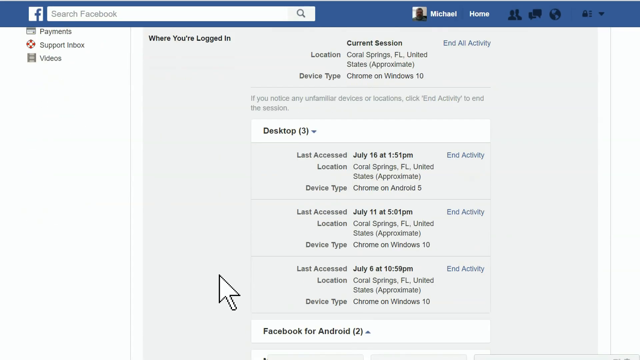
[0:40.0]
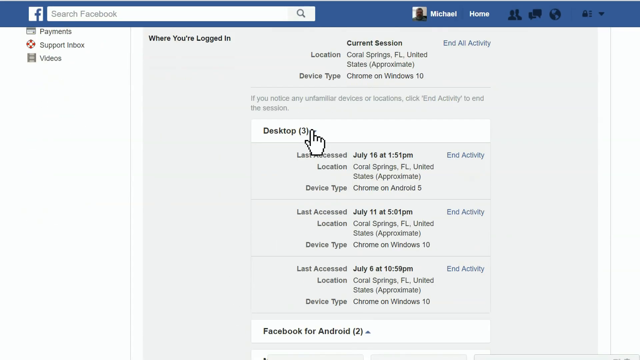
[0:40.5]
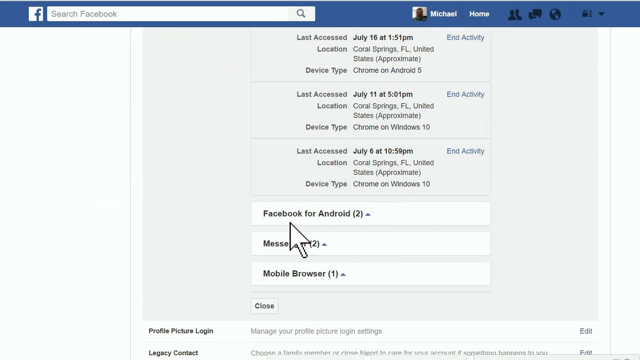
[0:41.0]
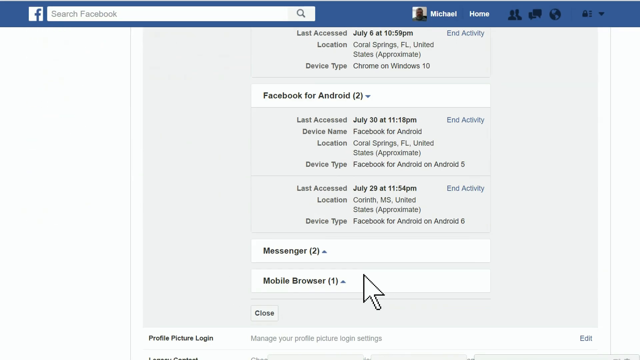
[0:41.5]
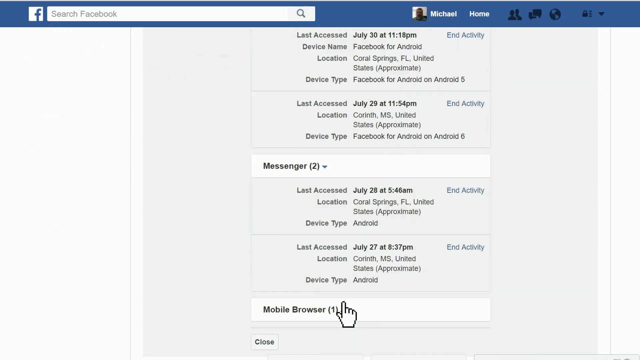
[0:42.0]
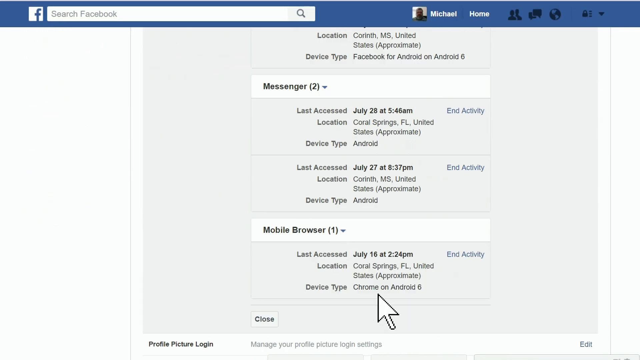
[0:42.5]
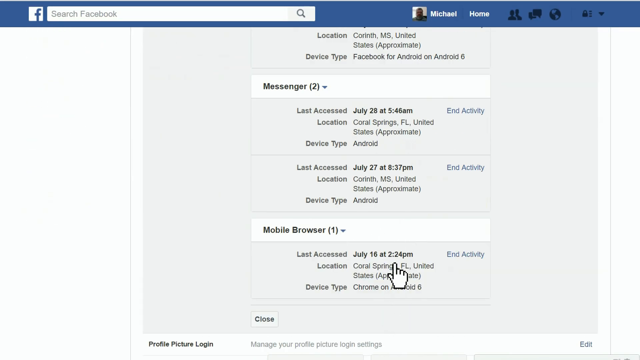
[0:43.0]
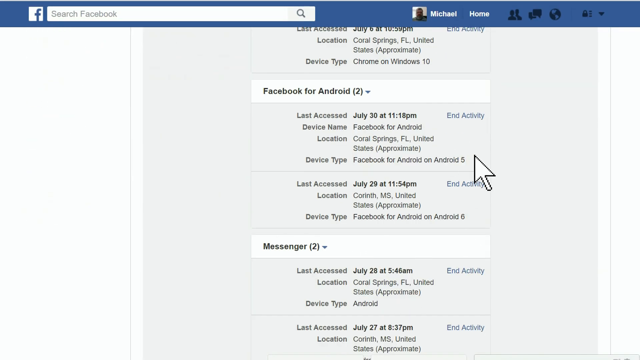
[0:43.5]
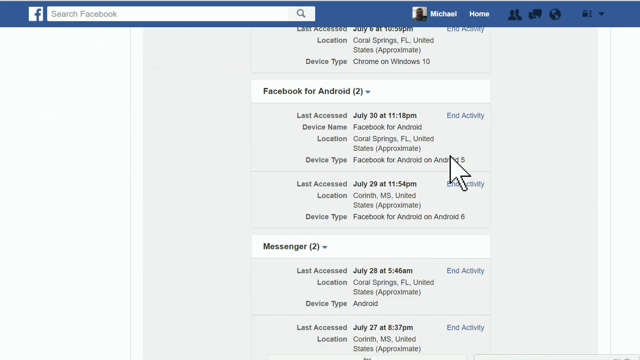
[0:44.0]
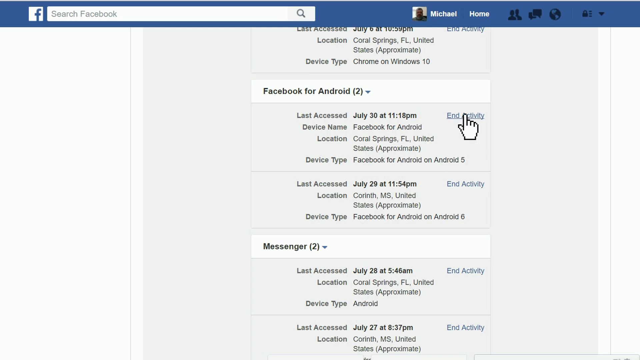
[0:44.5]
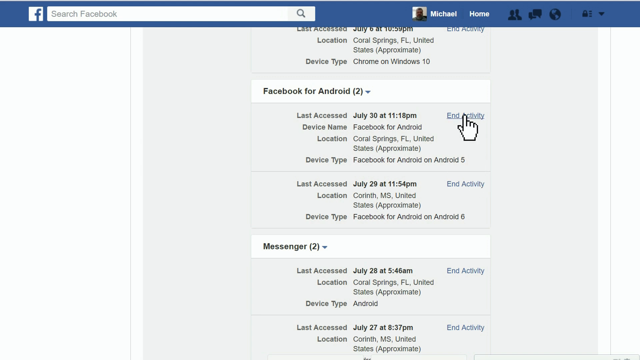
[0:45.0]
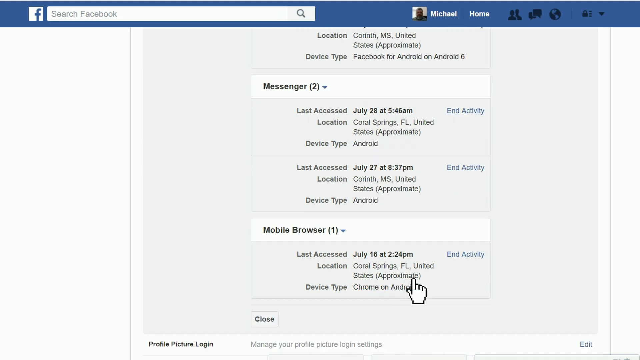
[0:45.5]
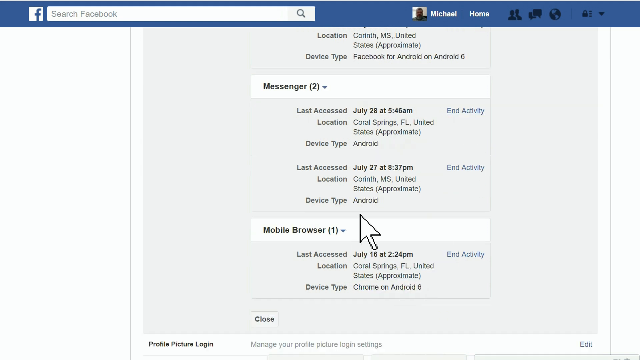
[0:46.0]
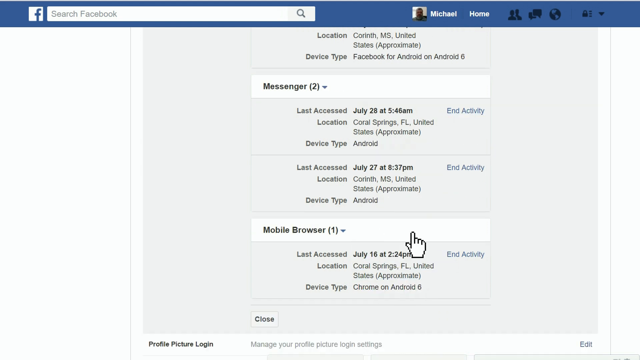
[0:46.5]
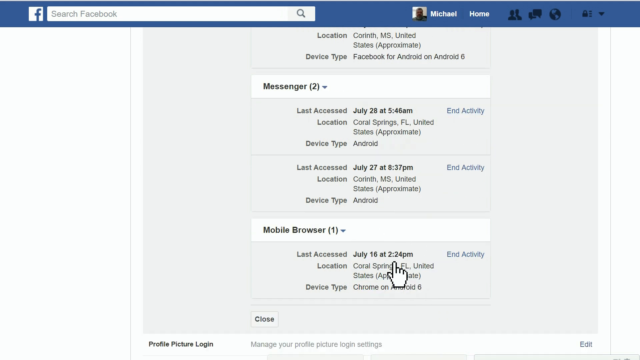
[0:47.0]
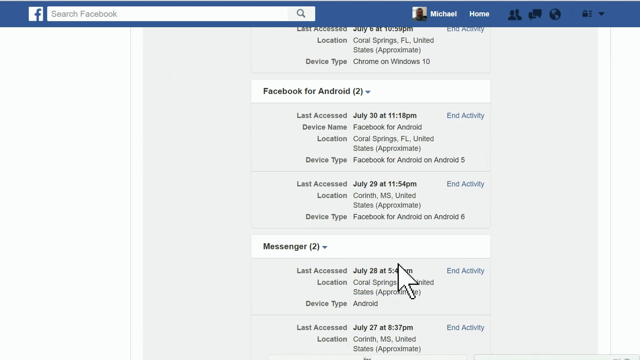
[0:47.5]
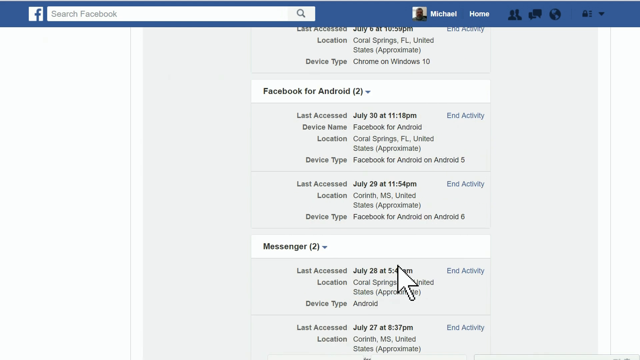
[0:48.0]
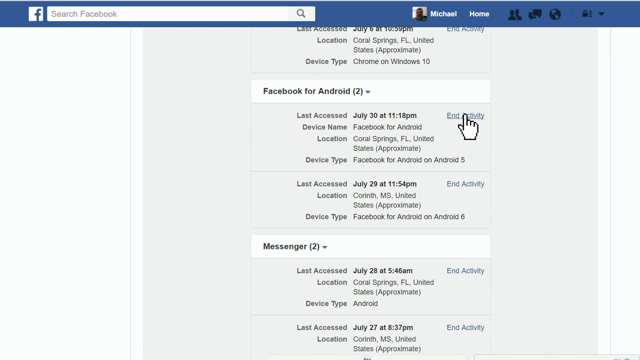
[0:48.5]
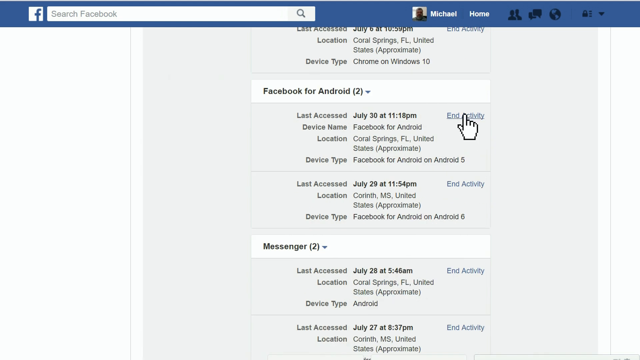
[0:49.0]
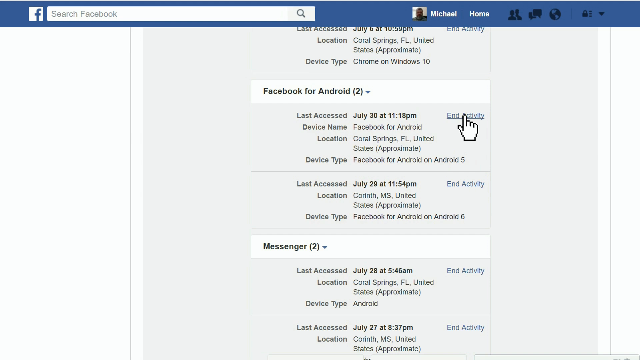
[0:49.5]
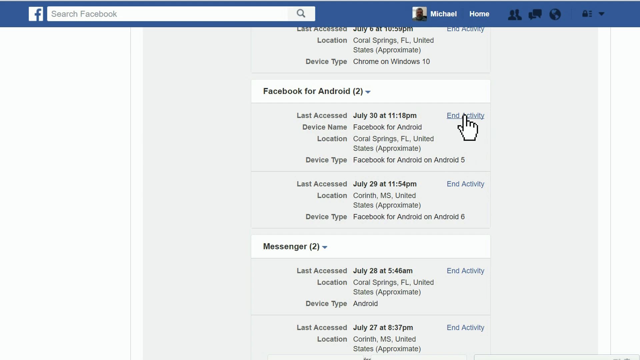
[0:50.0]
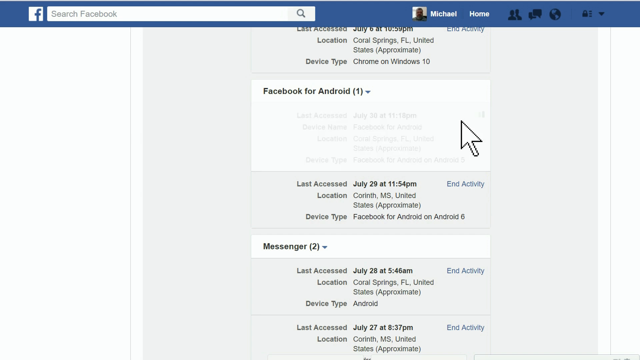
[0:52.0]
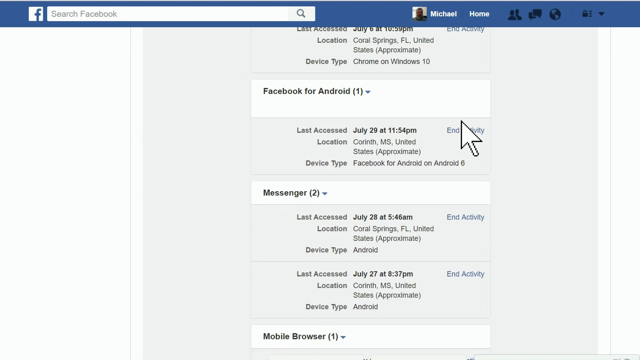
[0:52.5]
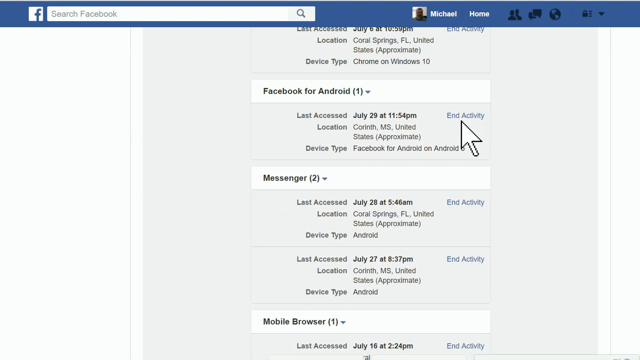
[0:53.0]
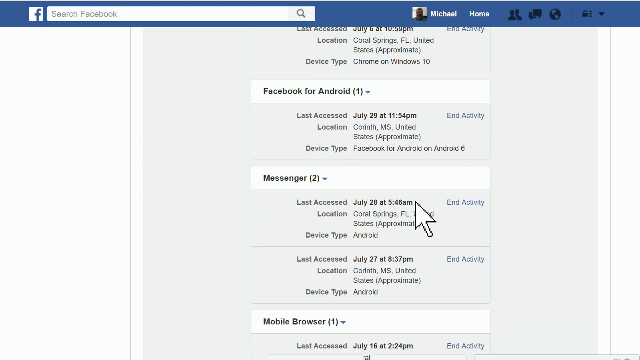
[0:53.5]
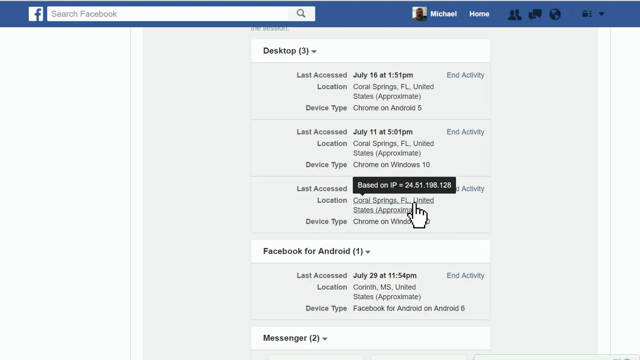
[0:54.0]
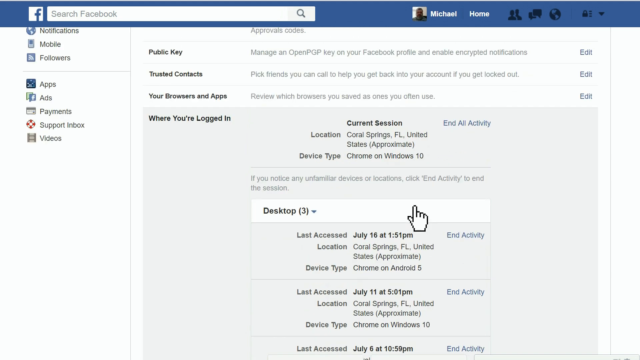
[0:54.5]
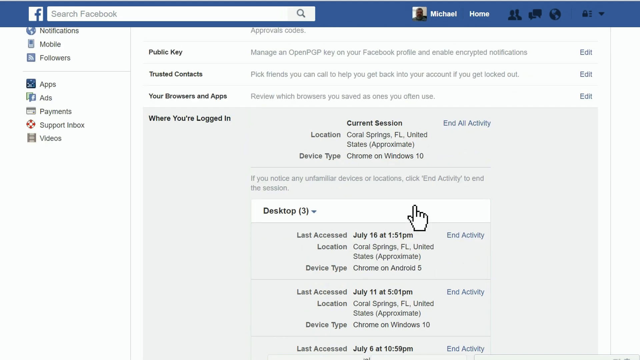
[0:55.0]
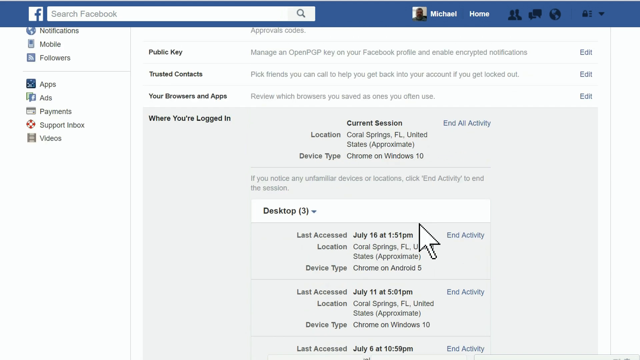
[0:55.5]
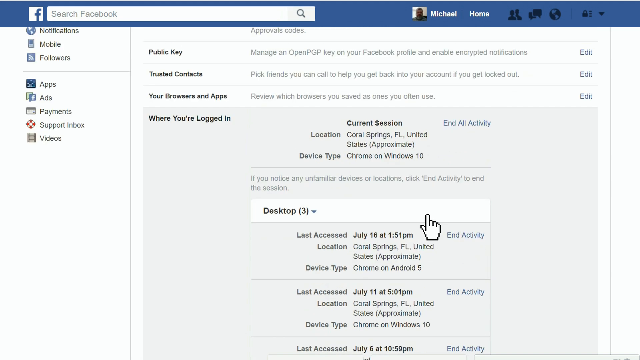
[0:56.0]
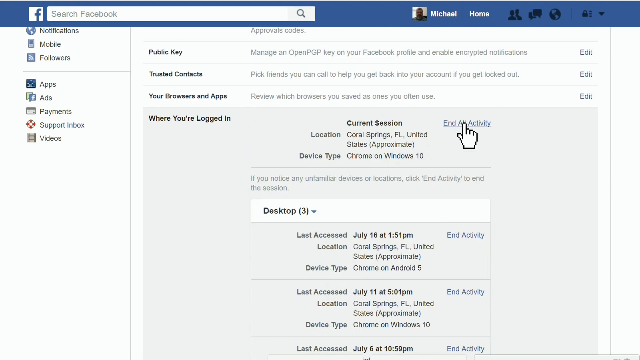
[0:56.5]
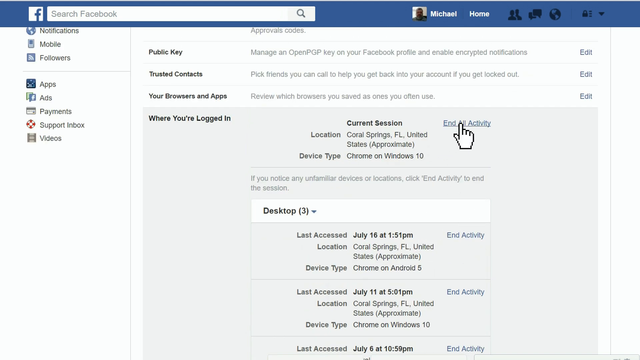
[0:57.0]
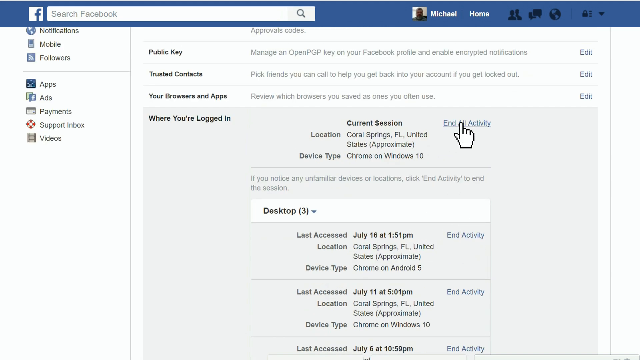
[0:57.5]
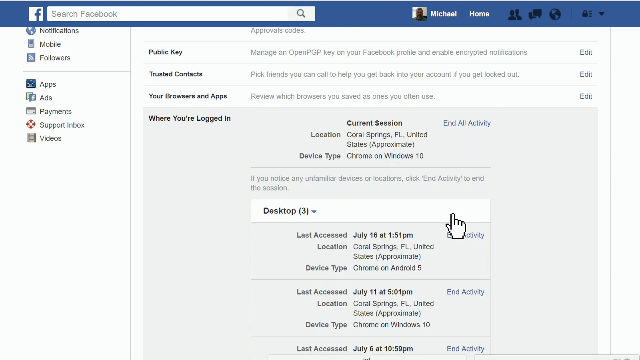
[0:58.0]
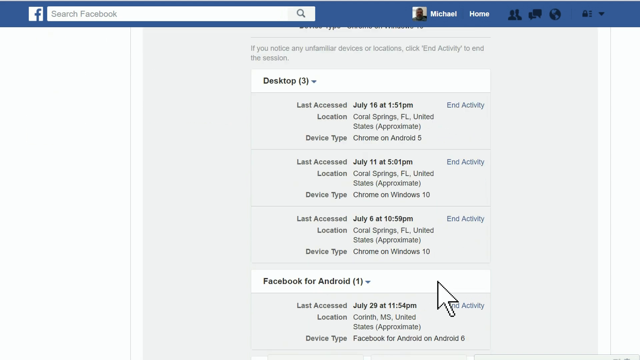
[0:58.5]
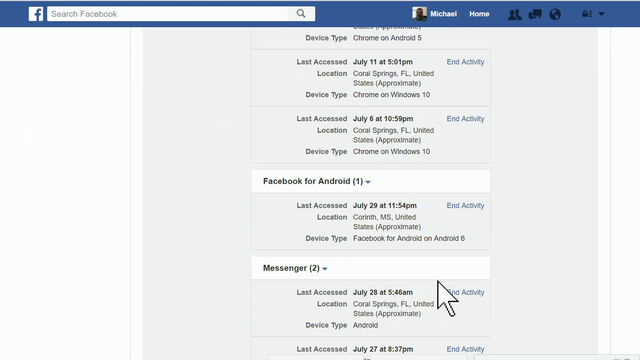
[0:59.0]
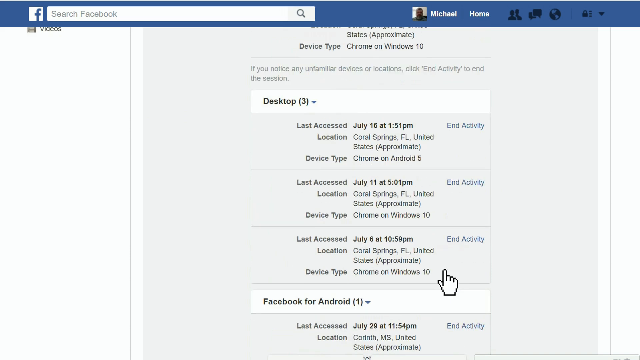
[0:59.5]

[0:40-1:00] This section shows that the user has several Facebook sessions open in different places. For example, Messenger is open in Coral Springs, Florida, United States, on an Android cell phone, dated July 28 at 5:40 p.m. Another session is open in an Internet browser on an Android, also in Coral Springs, Florida, United States, with a different date. There is an option to end the activity in these sessions, labeled "finish the activity". Since there are many sessions, the option above, "finish all sessions", seems to be suggested, and it is clicked.